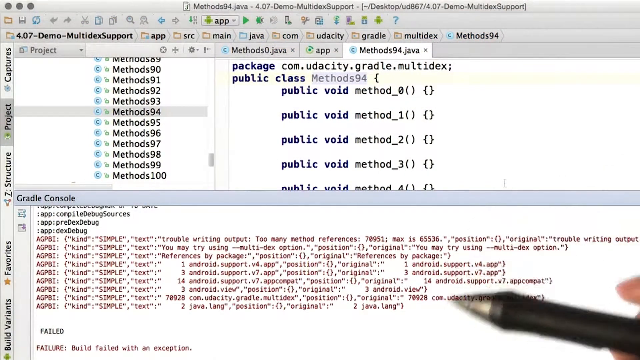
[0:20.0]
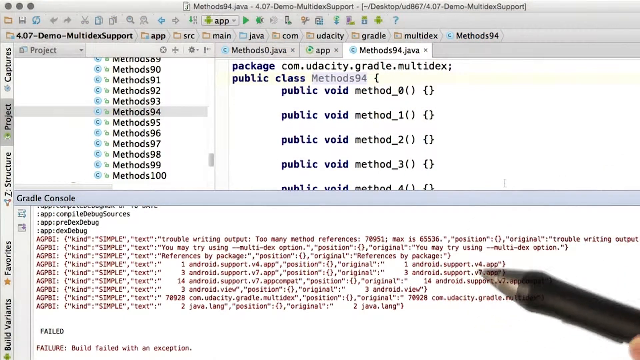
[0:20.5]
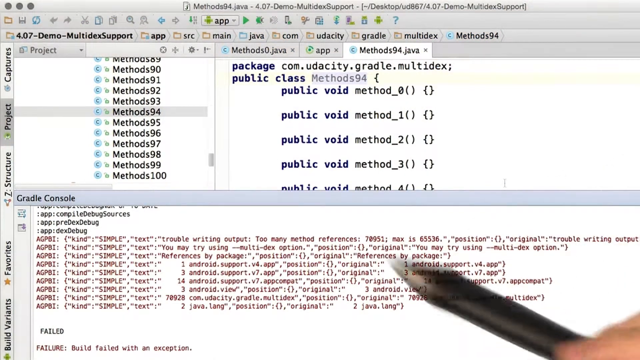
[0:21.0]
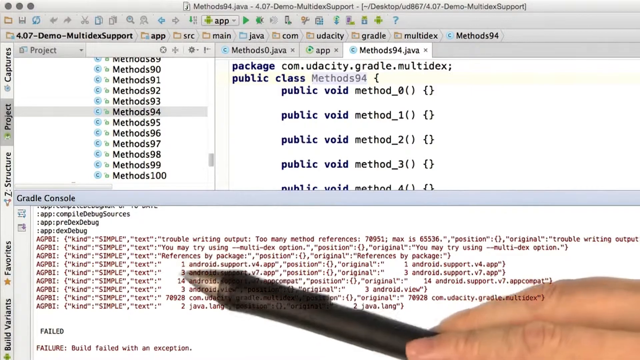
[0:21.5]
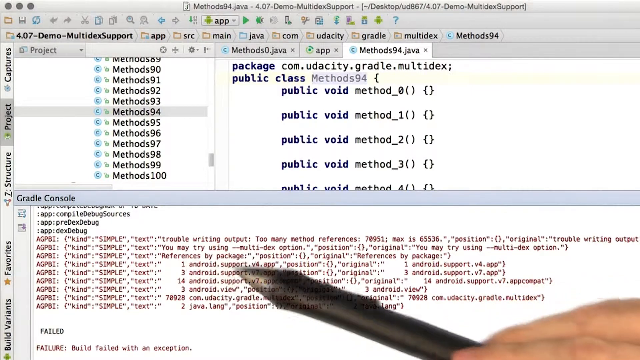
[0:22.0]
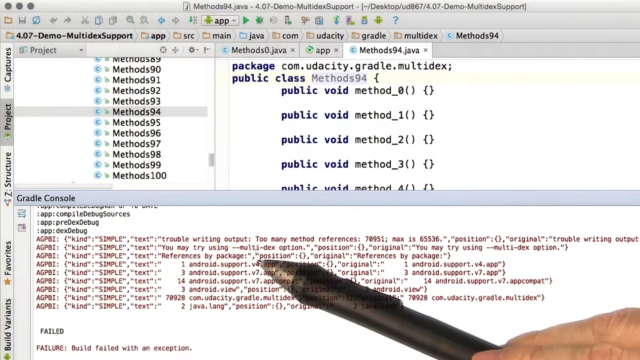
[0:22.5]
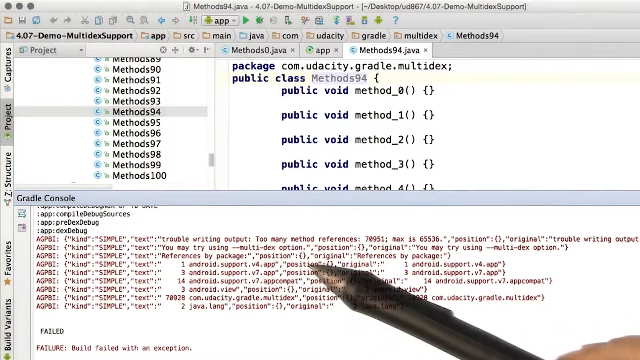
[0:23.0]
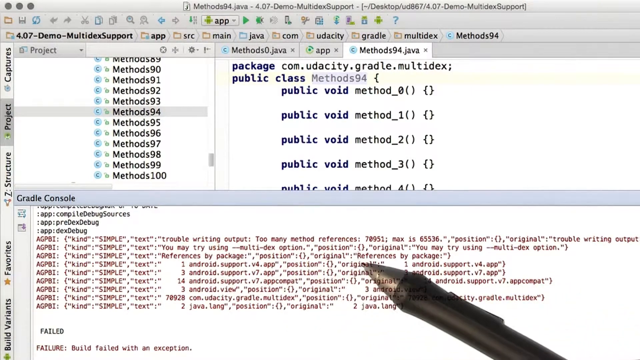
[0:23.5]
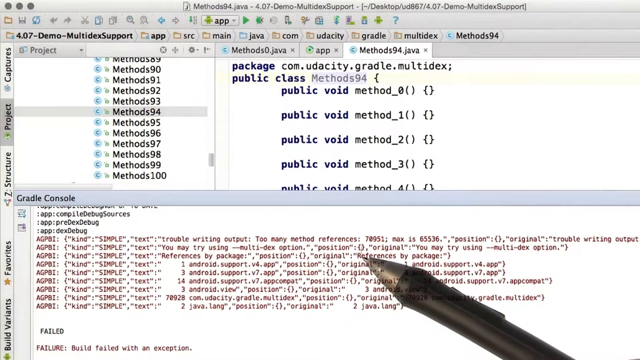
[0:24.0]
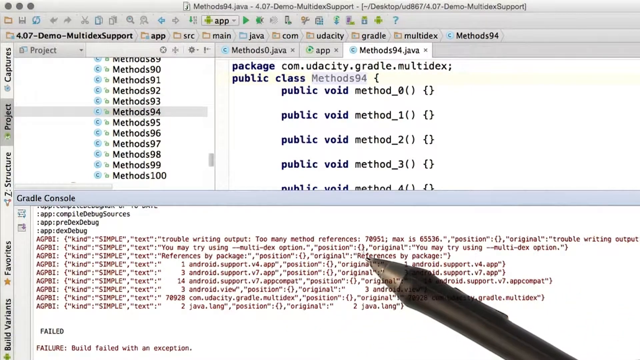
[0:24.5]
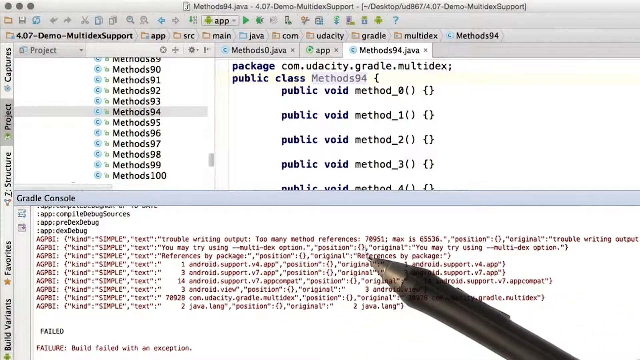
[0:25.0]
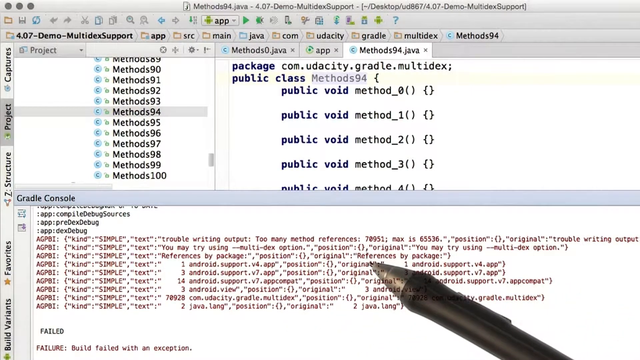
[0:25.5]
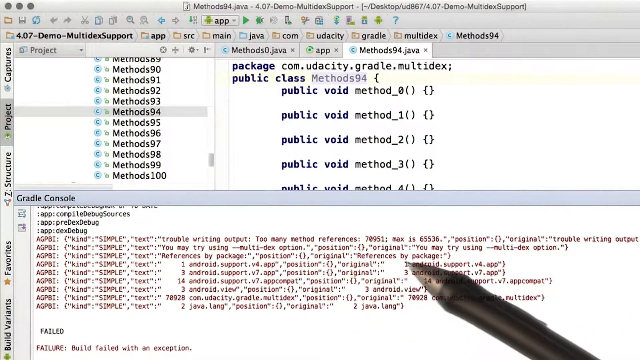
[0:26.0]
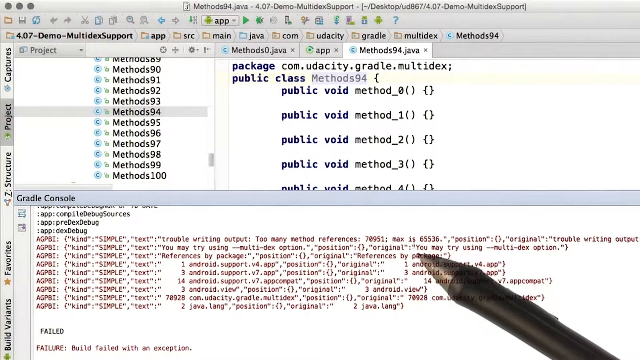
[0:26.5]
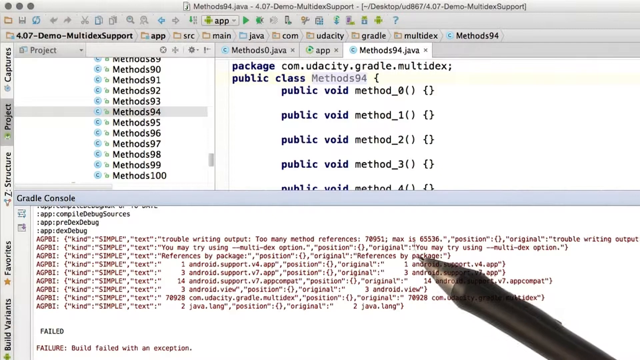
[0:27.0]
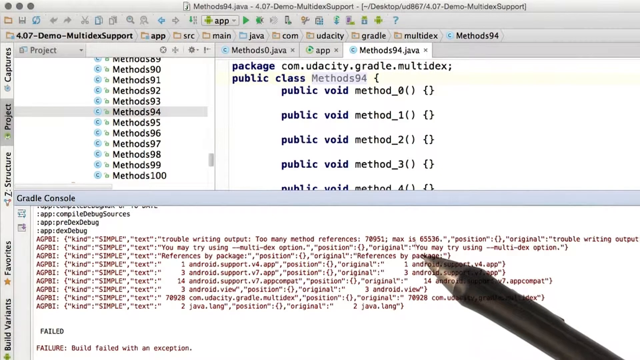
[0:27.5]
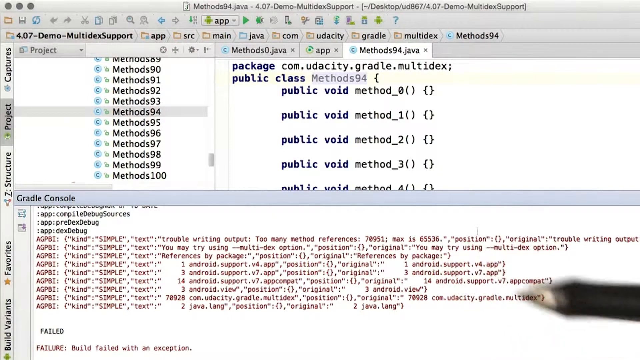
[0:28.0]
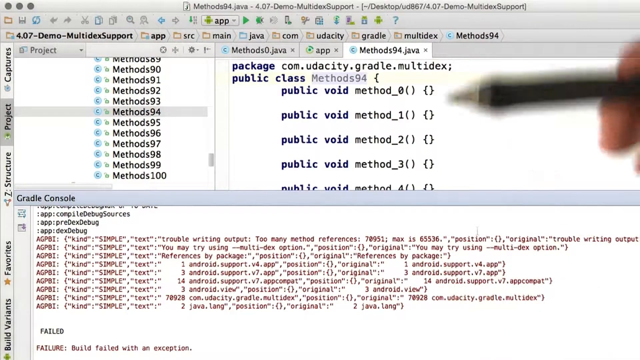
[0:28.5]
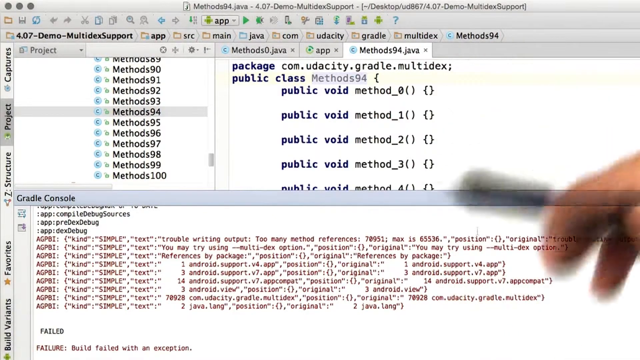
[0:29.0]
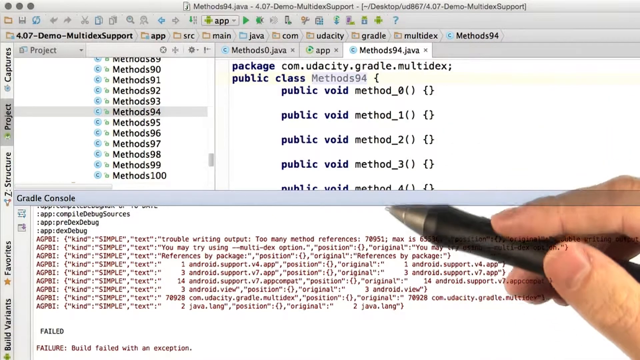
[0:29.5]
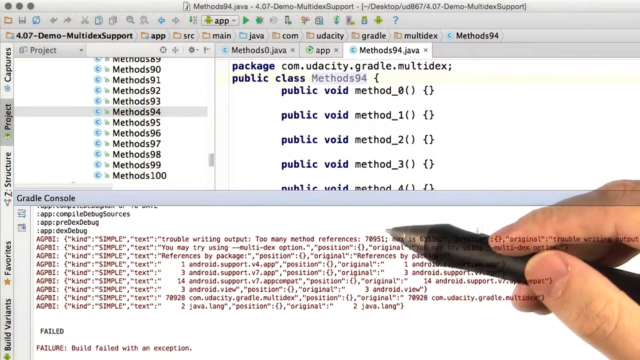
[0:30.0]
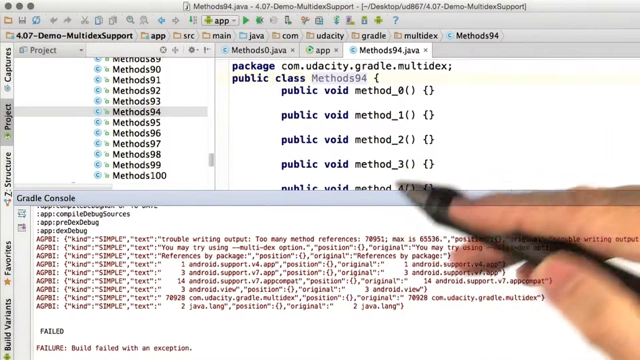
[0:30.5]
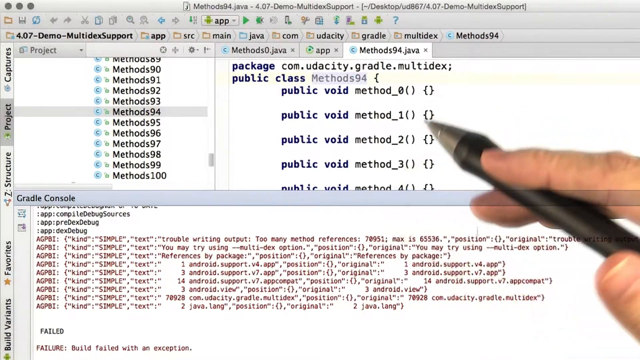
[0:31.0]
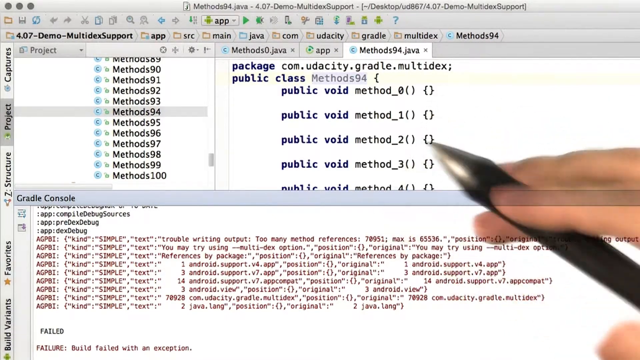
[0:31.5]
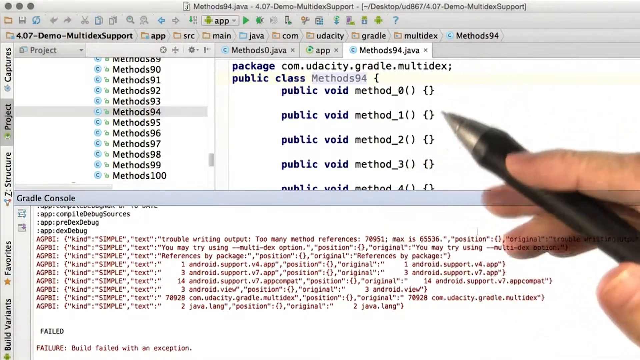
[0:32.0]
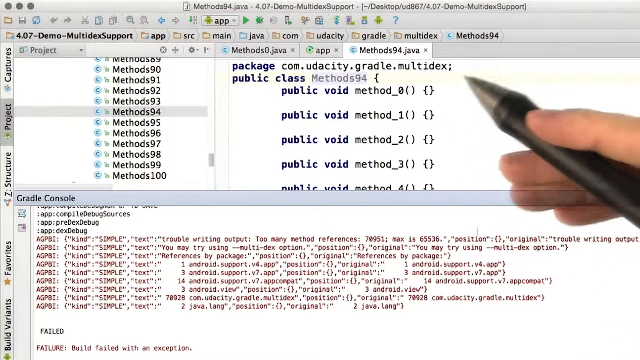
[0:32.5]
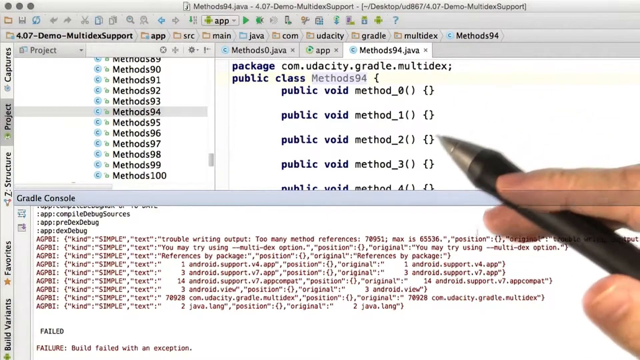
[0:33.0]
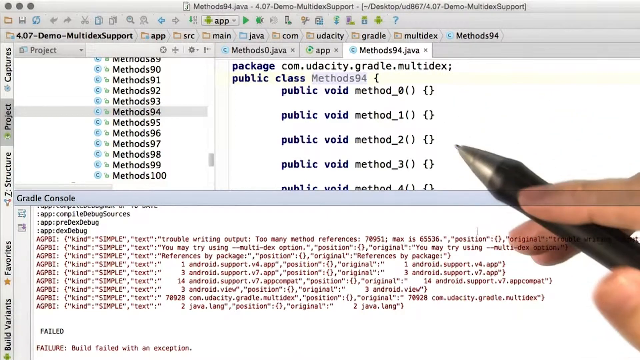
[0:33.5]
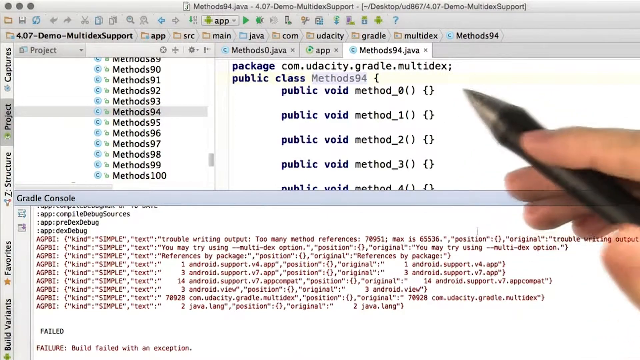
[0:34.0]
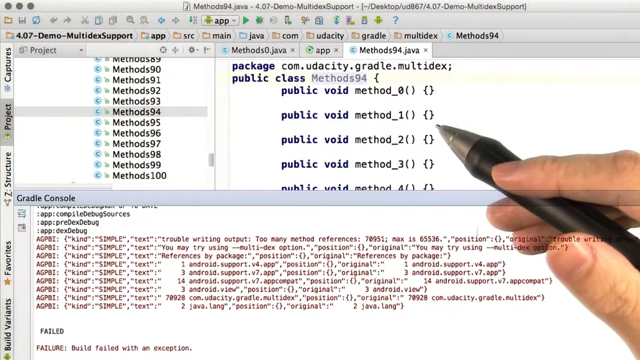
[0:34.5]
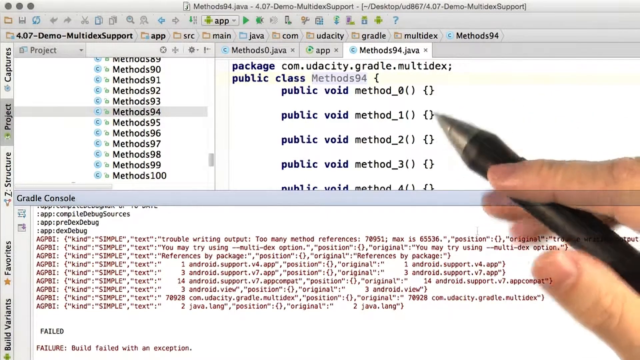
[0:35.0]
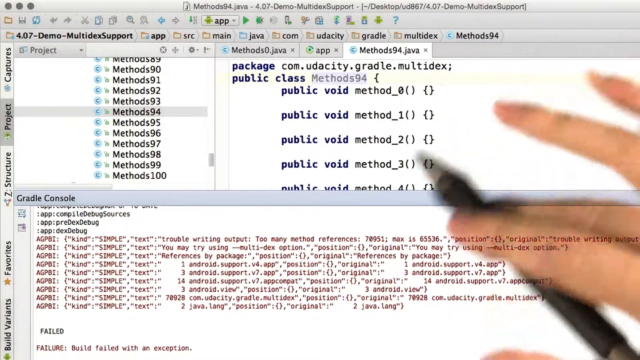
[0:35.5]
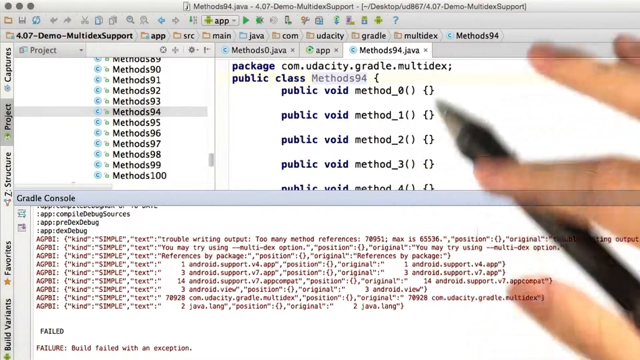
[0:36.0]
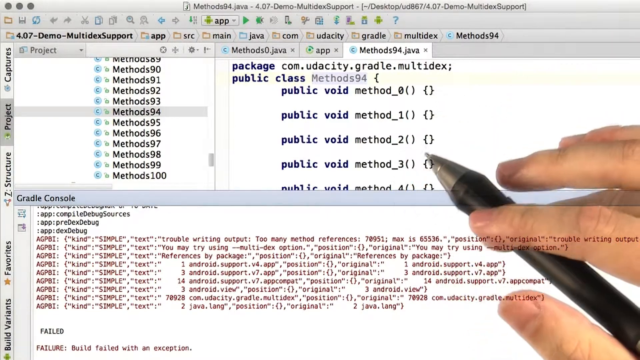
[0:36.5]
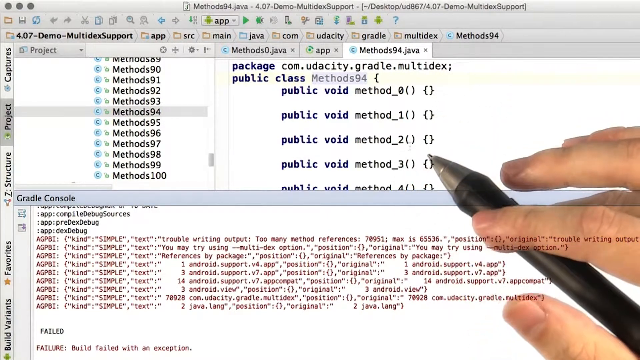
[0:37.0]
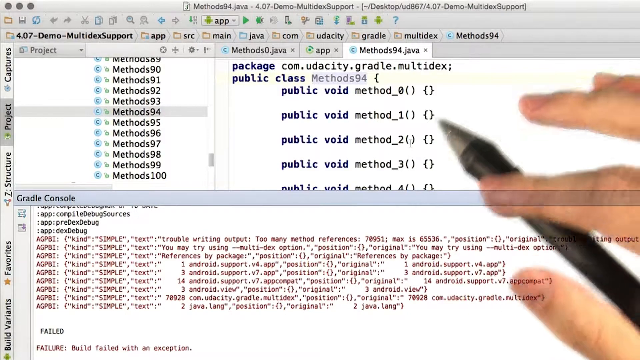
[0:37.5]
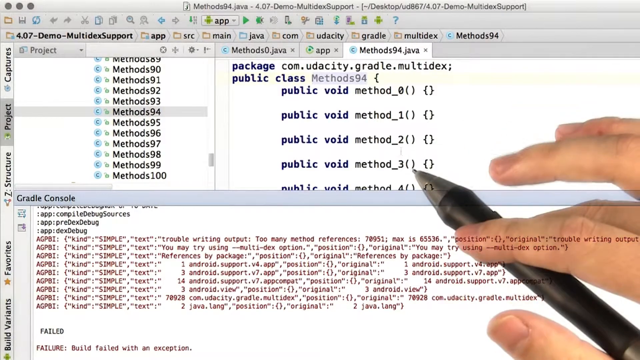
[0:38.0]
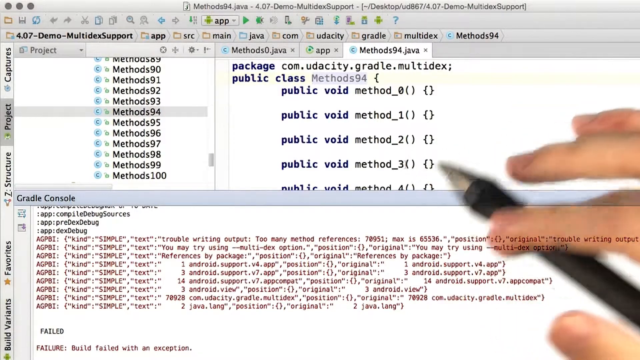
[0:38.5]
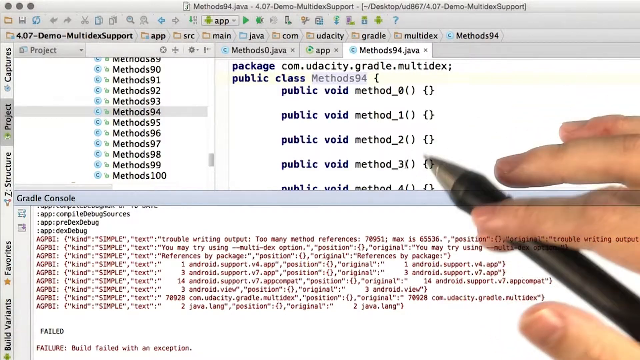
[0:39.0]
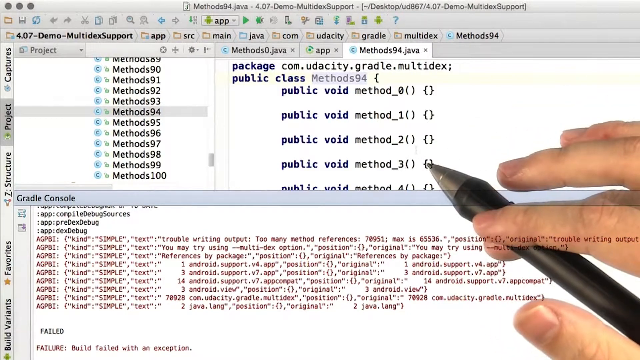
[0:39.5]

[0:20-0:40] A person holds a black pen in his left hand and is coding Java methods. Hundreds of Java methods are displayed on the screen. A new screen in red is added at the bottom, and the person holds the black pen on his screen. Some software, apparently, is being used to display the code in red. The background of this display is blue, and a computer is being used for the text.